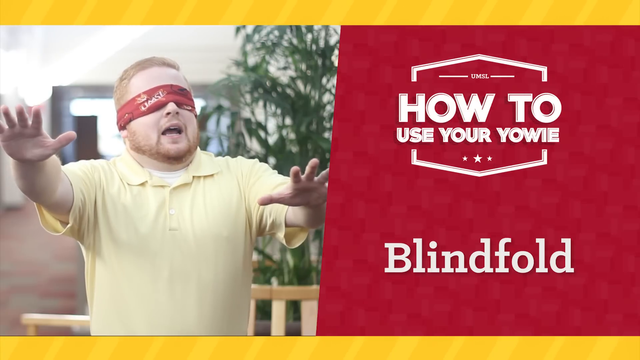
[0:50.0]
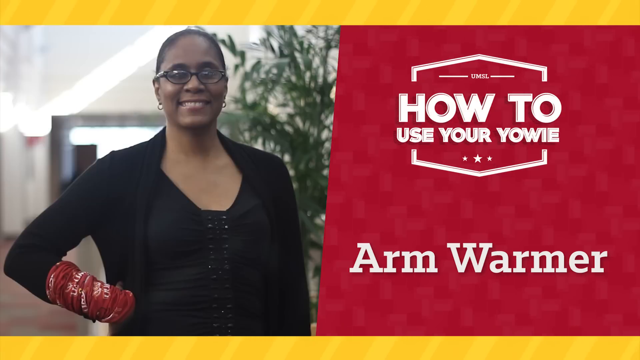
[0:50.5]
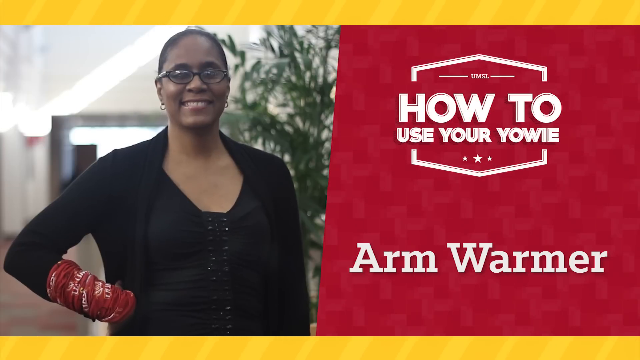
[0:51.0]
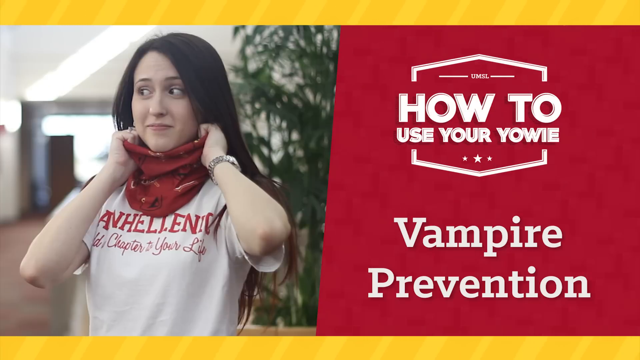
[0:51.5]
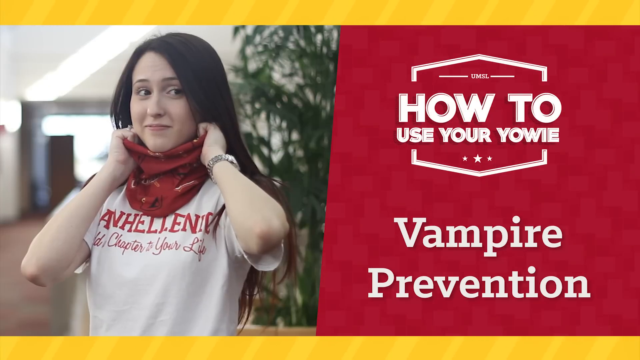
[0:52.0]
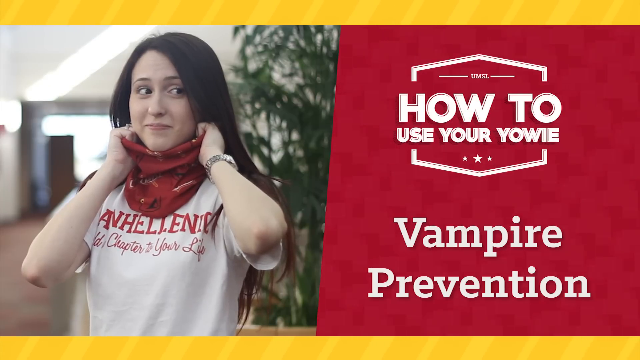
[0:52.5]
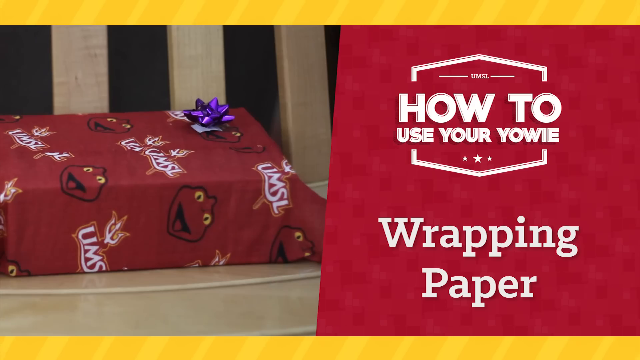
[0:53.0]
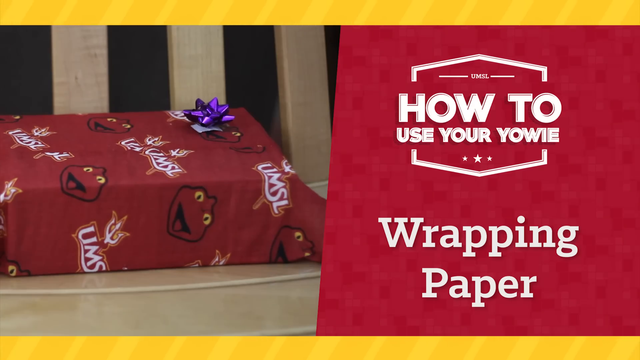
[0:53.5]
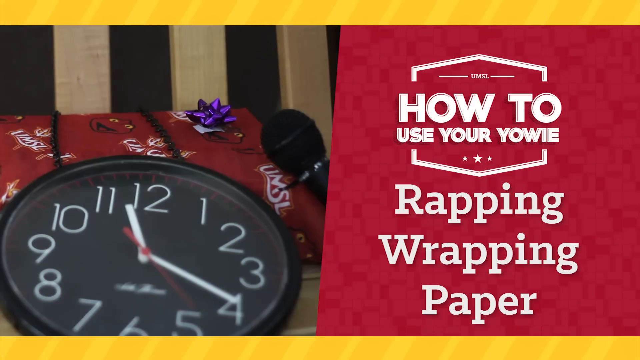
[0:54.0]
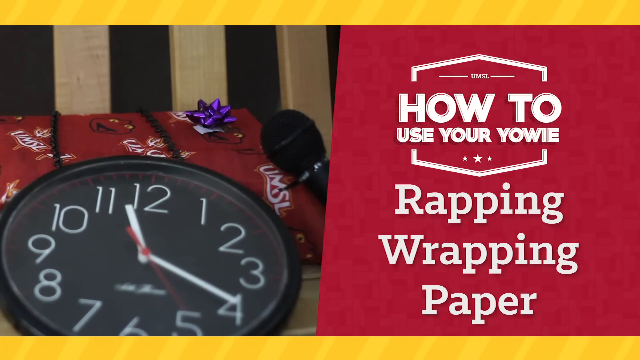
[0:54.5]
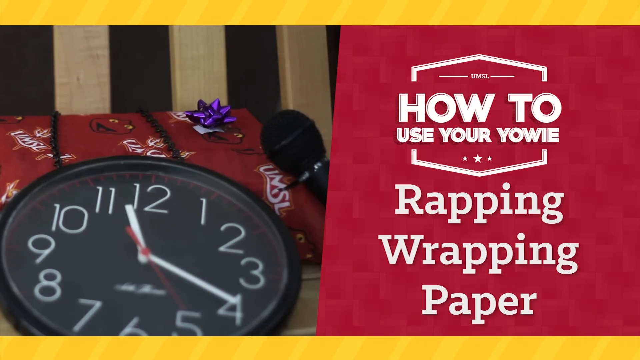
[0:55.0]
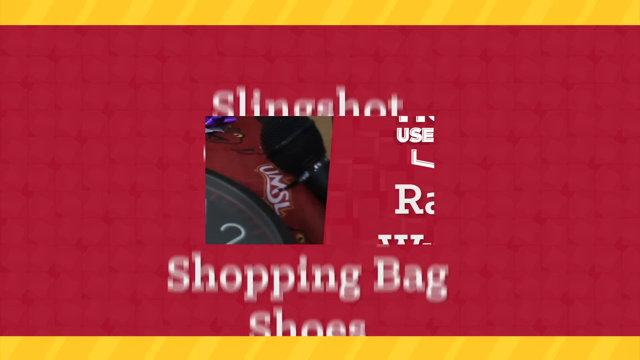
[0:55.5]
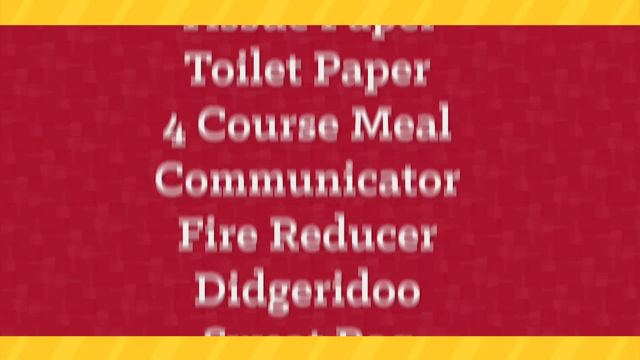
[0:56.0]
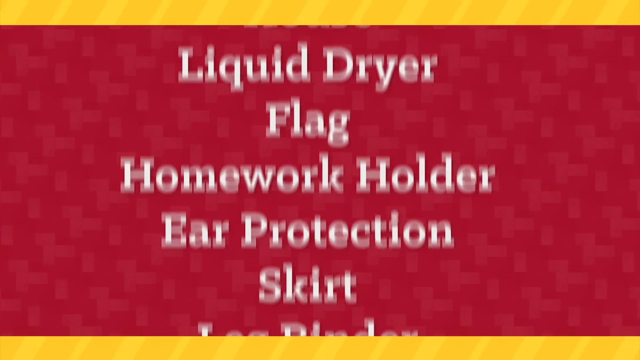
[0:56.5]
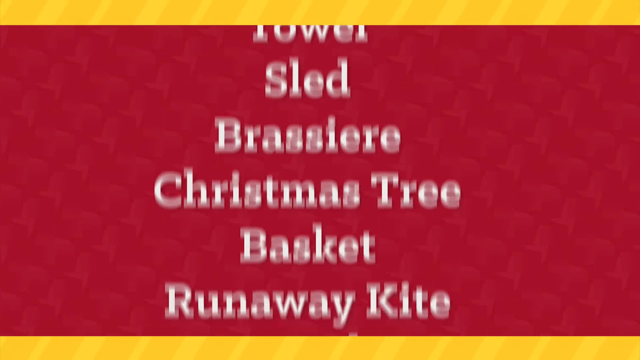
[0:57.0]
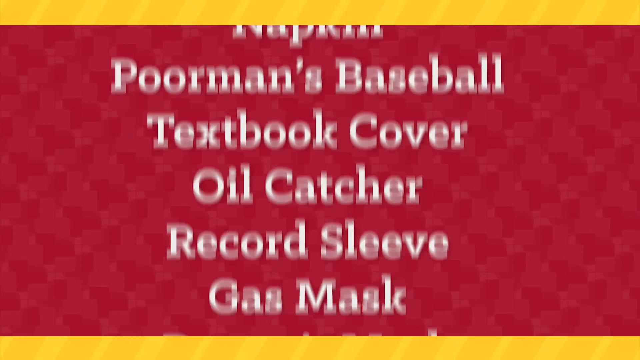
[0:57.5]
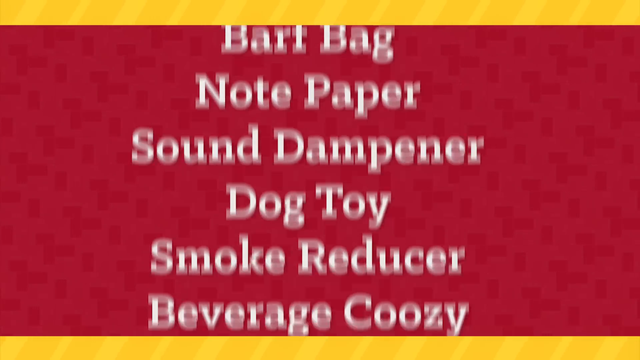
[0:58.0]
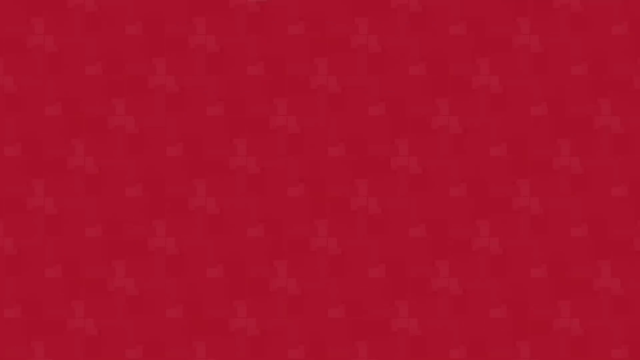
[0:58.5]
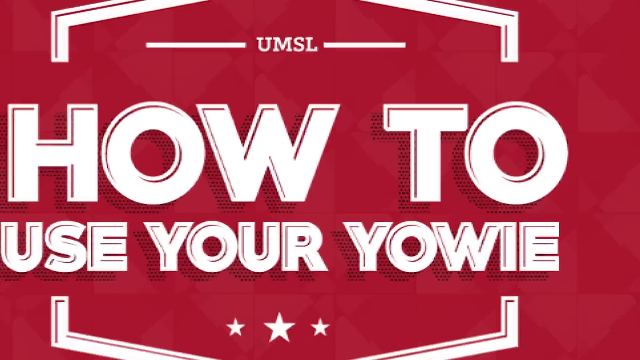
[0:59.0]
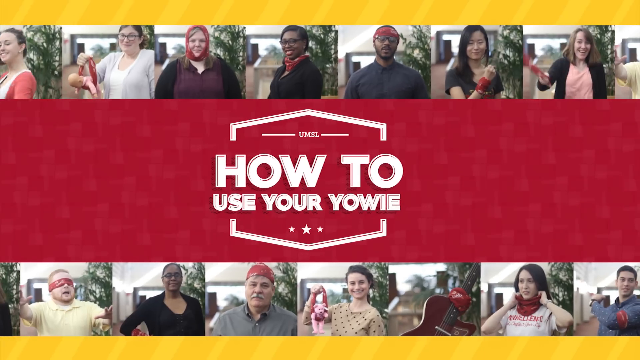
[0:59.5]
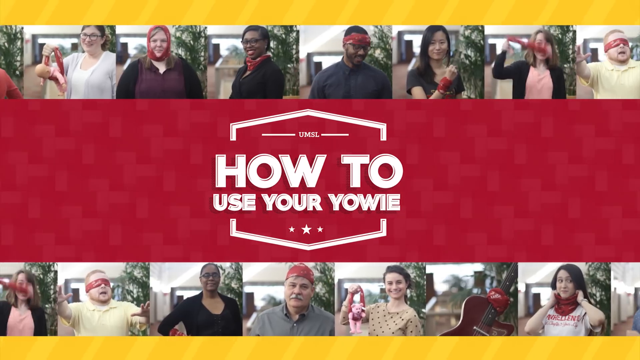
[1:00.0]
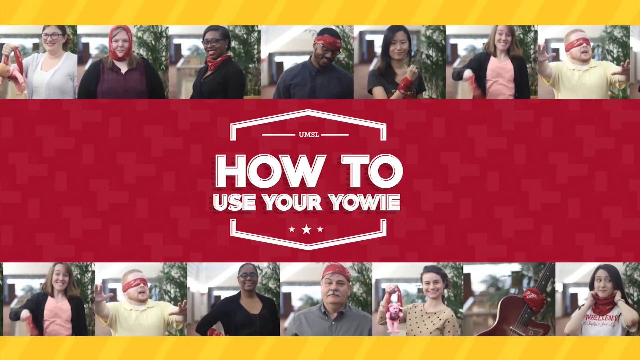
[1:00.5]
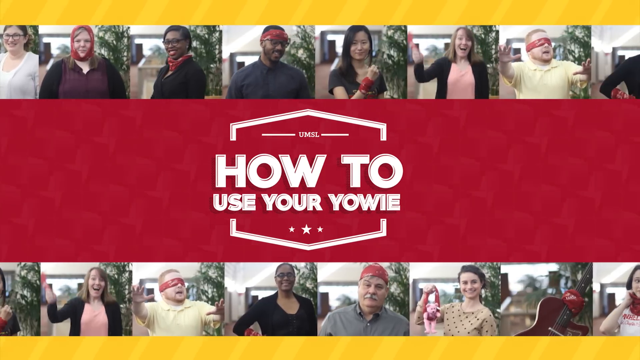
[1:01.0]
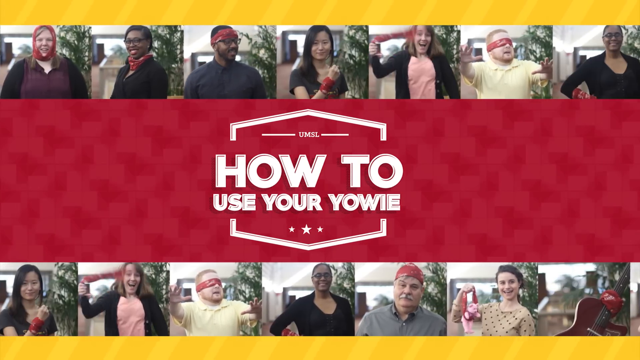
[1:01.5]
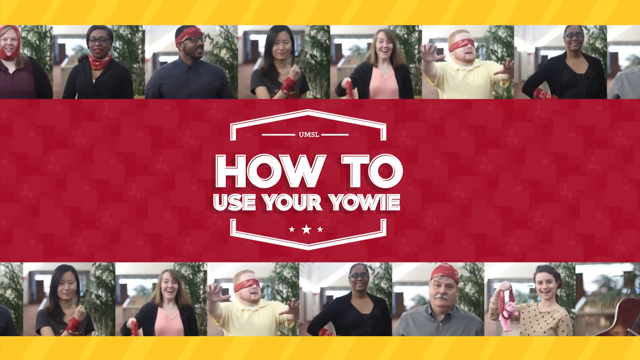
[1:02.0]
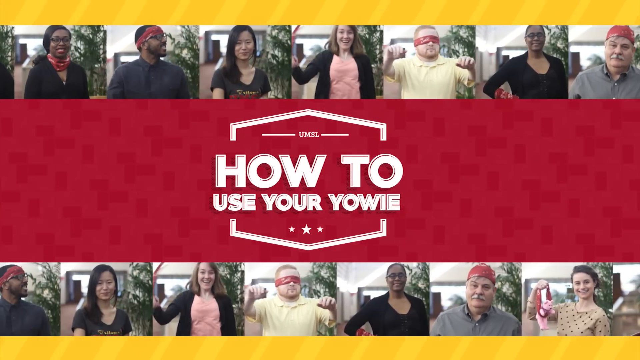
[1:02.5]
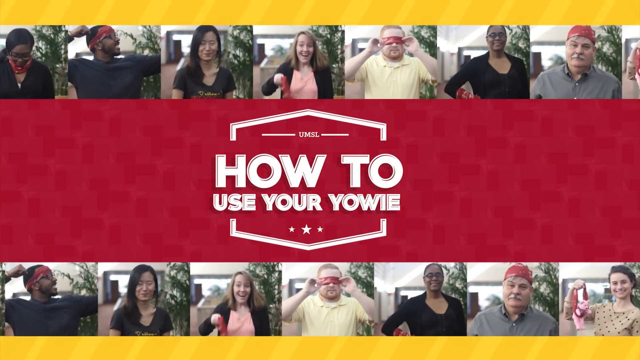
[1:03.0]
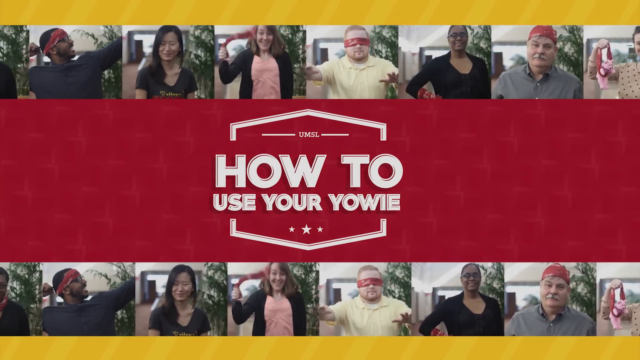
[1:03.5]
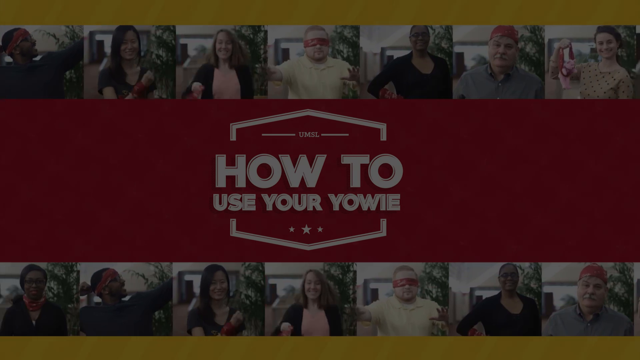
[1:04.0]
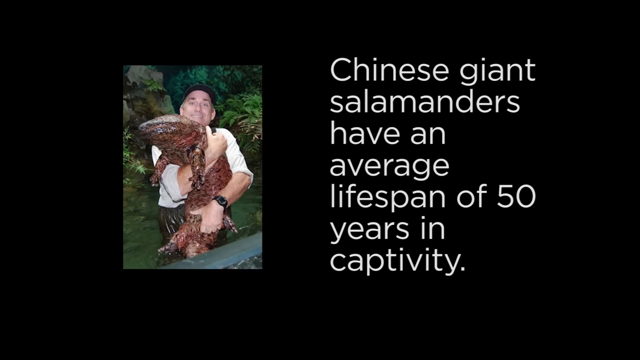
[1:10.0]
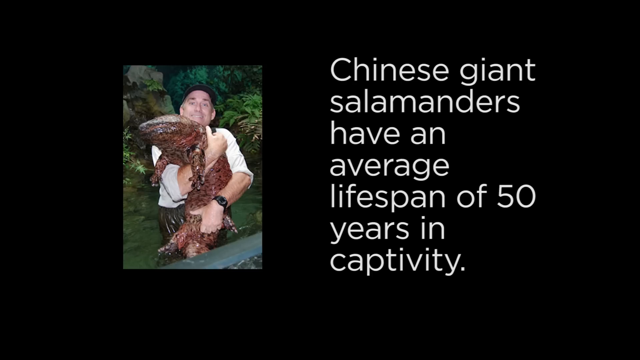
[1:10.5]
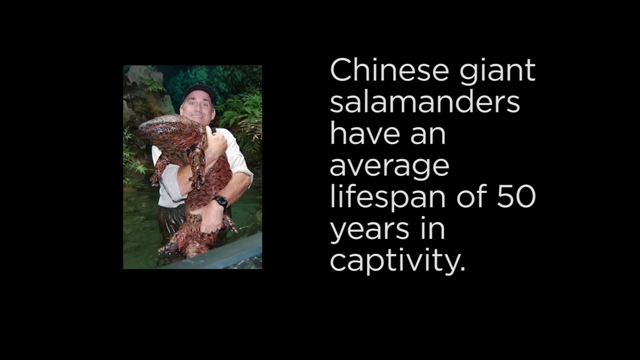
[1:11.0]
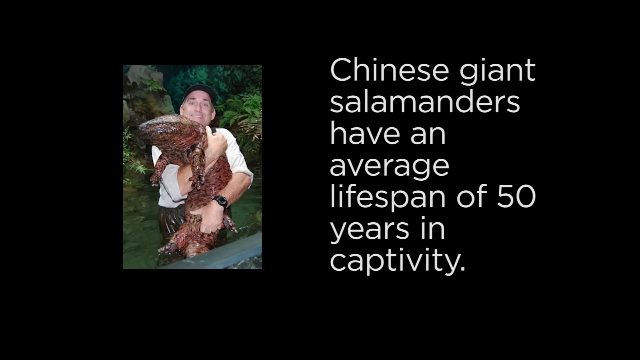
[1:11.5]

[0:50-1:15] The boy in the yellow shirt with the yowie wrapped around his eyes like a blindfold reaches out as if trying to see. A Black woman dressed all in black then has it wrapped around her arm, using it as an arm warmer. The next girl has it wrapped around her neck, apparently to be funny, and the text says "vampire protection." After that, something is wrapped up in it like a gift, with the text "you can use it for wrapping paper." A screen then passes very quickly, with a few readable words: "slingshot, tube top, shopping bag, shoes, underwear, tissue paper, toilet paper, four-course meal, communicator, fire reducer, vacuum clogger, dinnerware, napkin, poor man's baseball, textbook, cover." The video ends with all of the people on the screen and "how to use your yowie" in the middle.